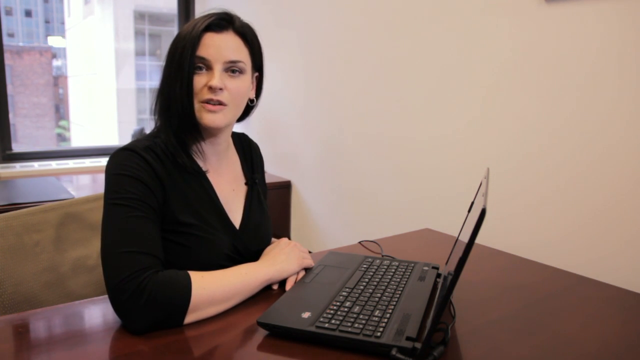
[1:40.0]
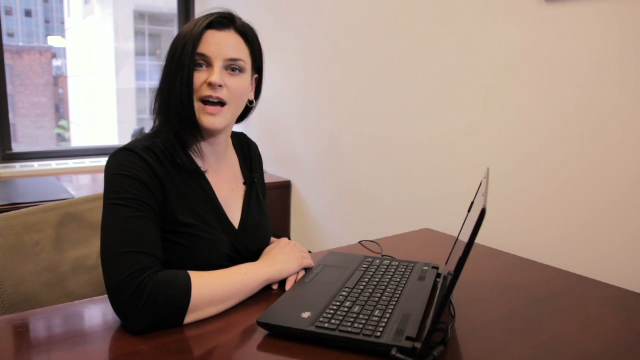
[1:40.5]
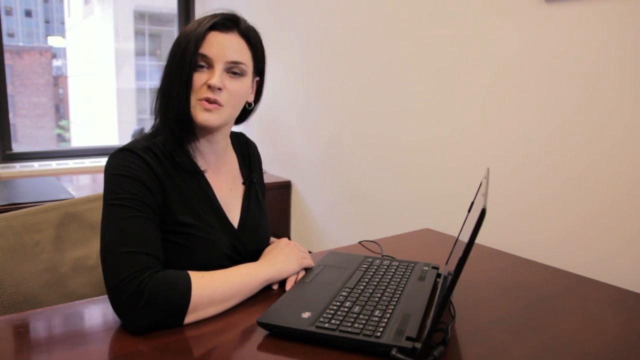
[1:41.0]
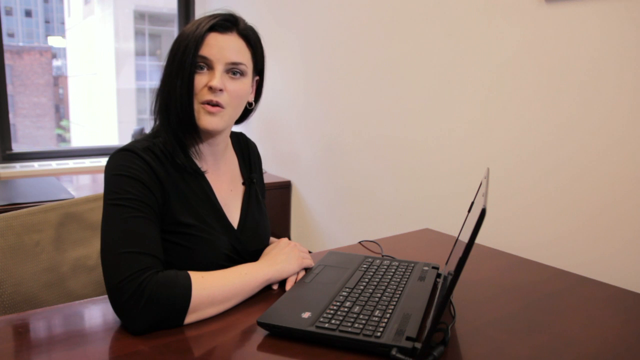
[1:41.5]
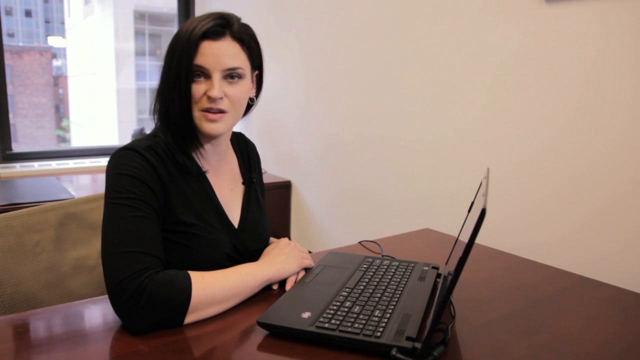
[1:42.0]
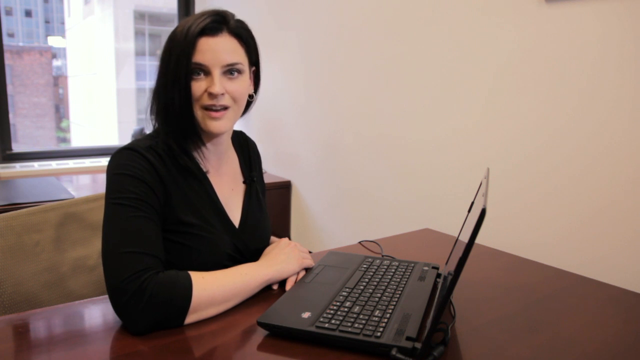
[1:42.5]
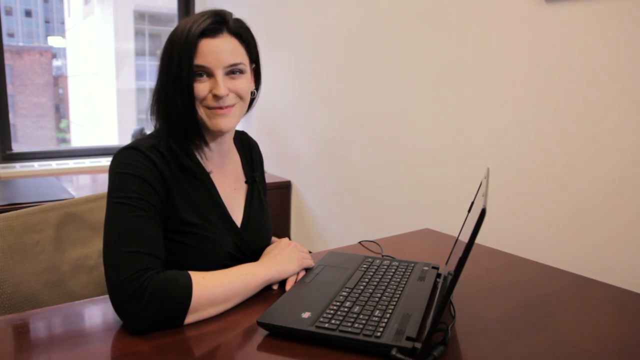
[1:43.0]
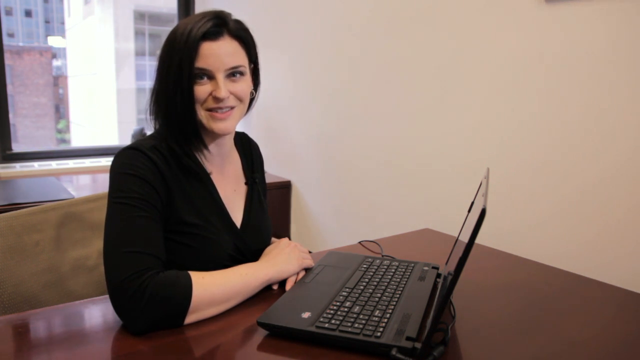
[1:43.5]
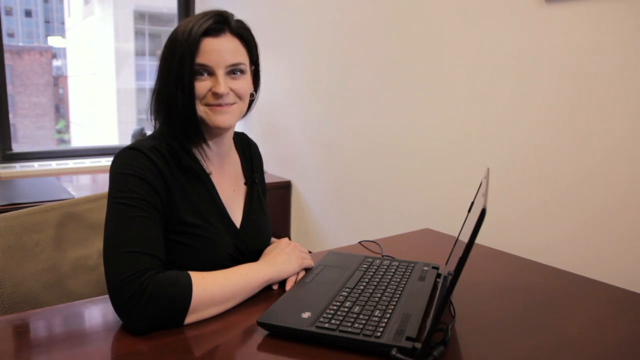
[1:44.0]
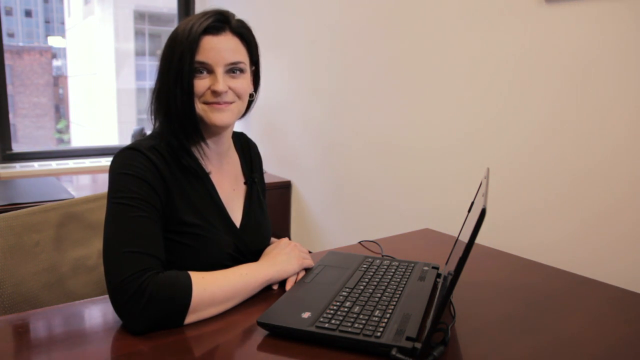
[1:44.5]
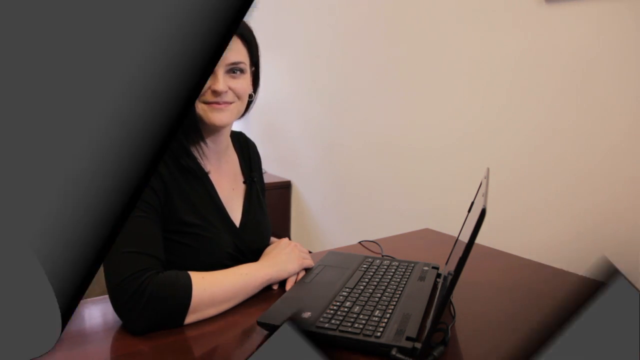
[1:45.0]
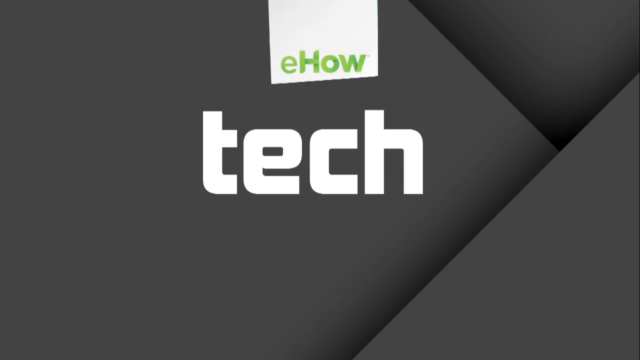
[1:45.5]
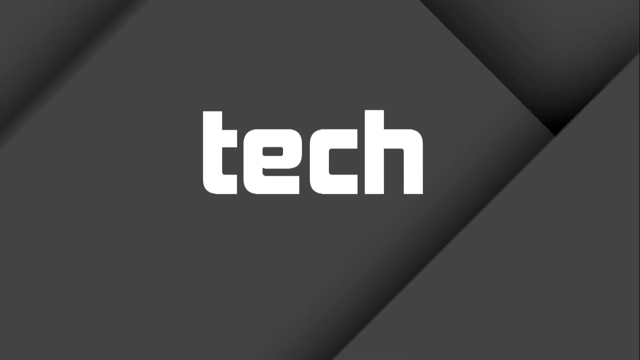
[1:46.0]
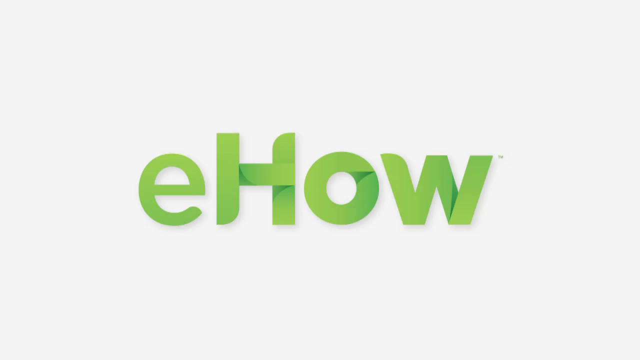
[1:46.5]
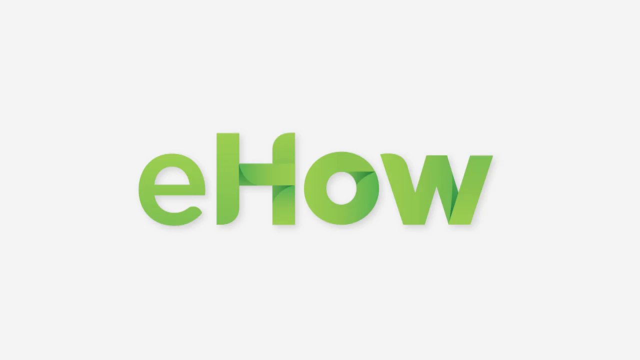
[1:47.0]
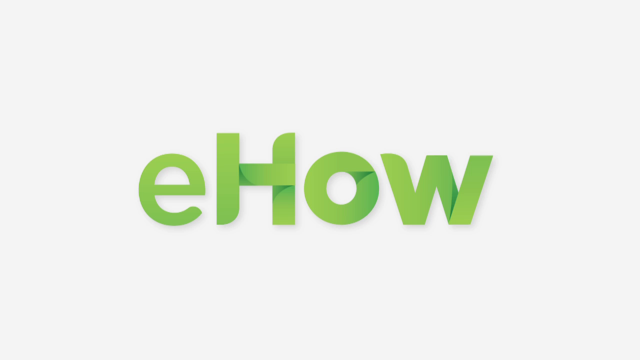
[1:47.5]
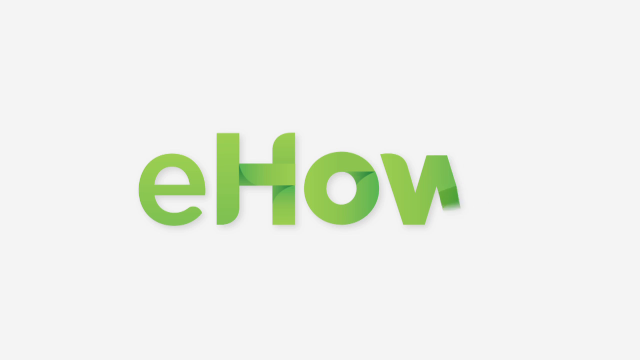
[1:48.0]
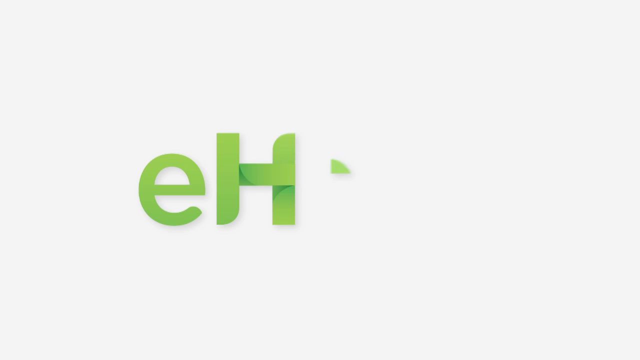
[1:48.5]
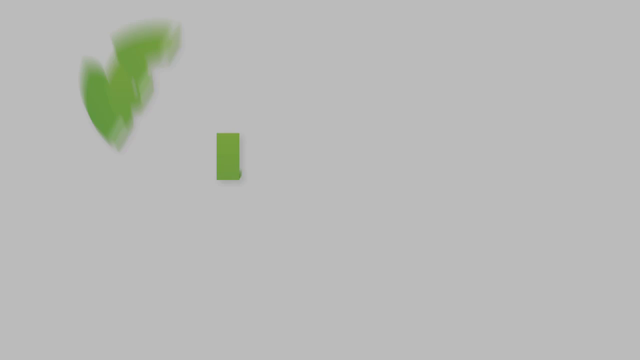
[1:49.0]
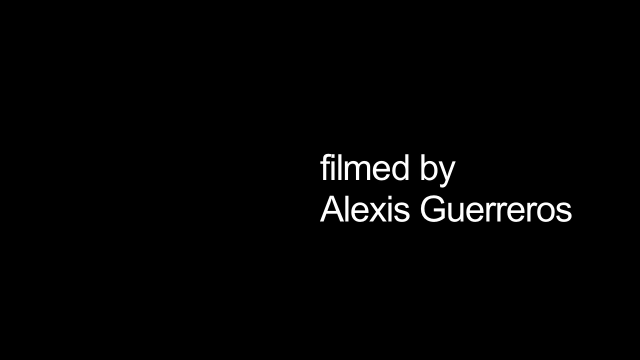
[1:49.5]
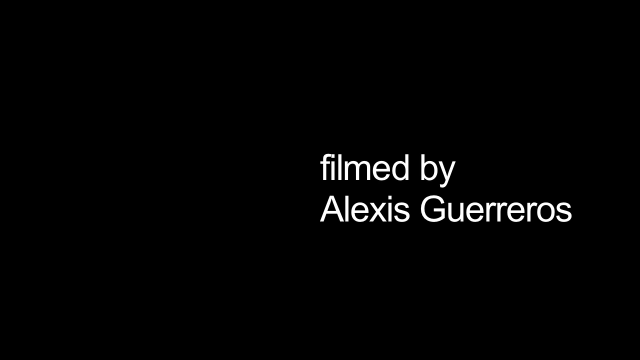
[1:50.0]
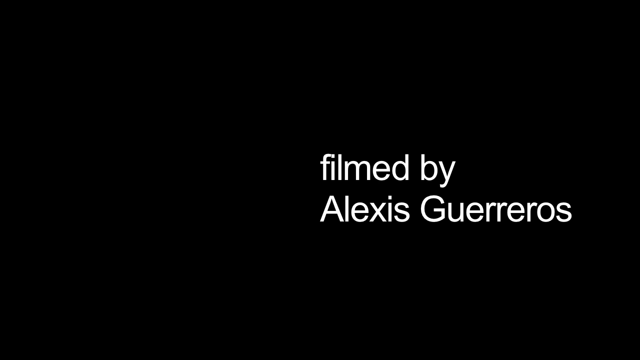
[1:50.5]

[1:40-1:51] A woman sits at a desk with an open laptop in front of her, her head turned to the side as she talks to the camera. She wears a black shirt and has dark, shoulder-length hair. As she finishes speaking, she kind of nods her head a little and smiles. Then the eHow Tech logo appears, the eHow logo disappears, and the video indicates it was filmed by Alexis Guerrero.